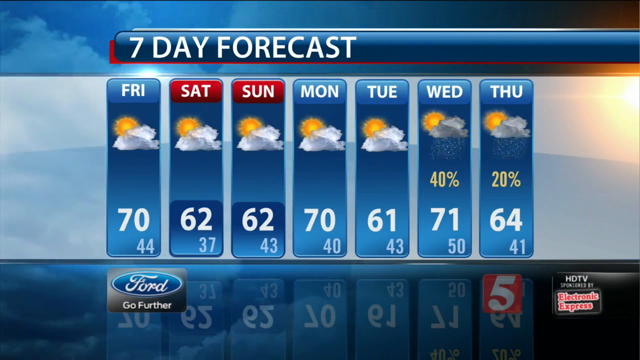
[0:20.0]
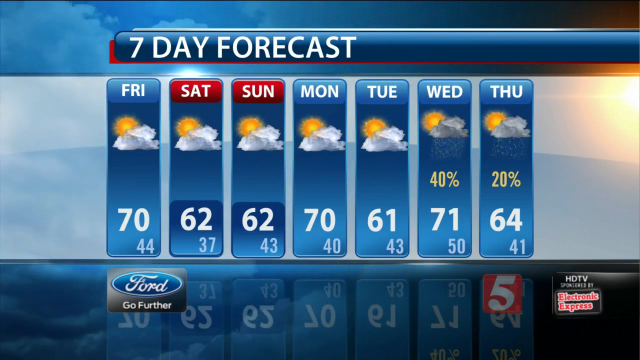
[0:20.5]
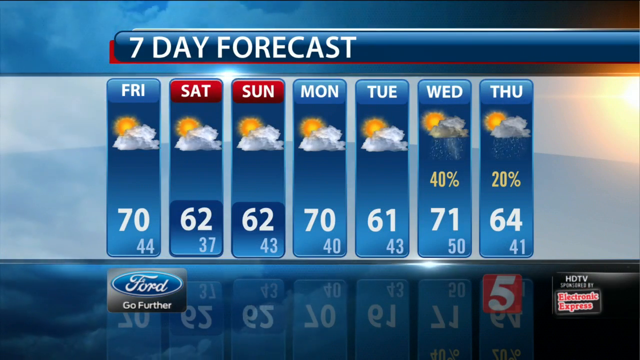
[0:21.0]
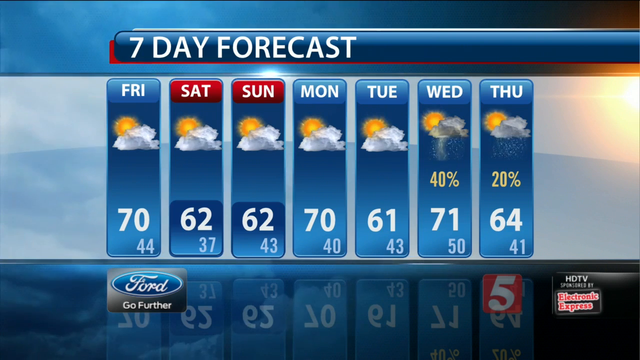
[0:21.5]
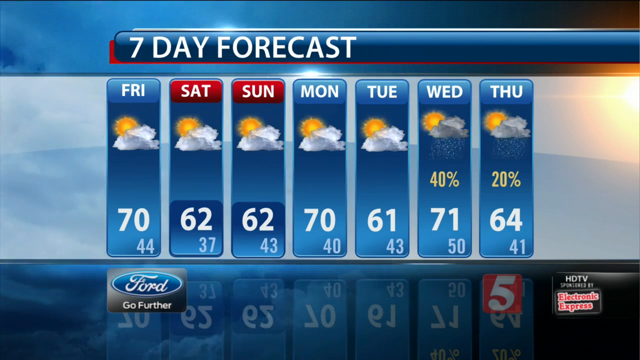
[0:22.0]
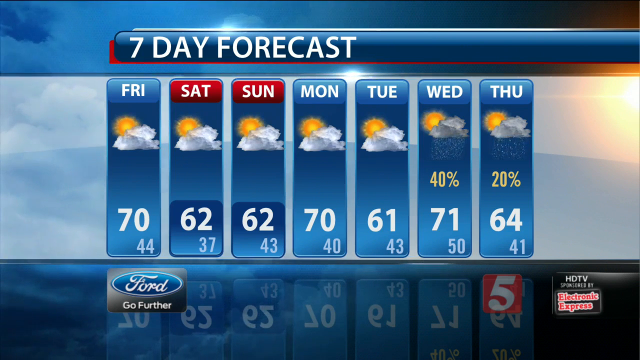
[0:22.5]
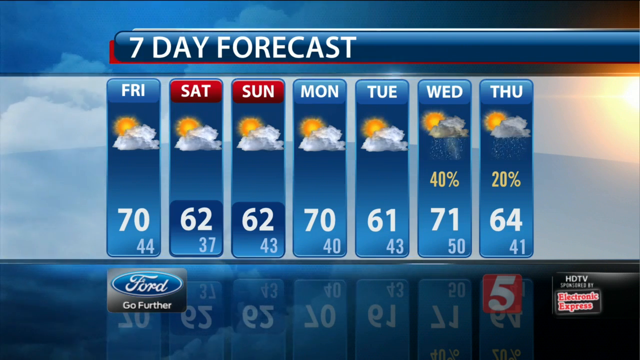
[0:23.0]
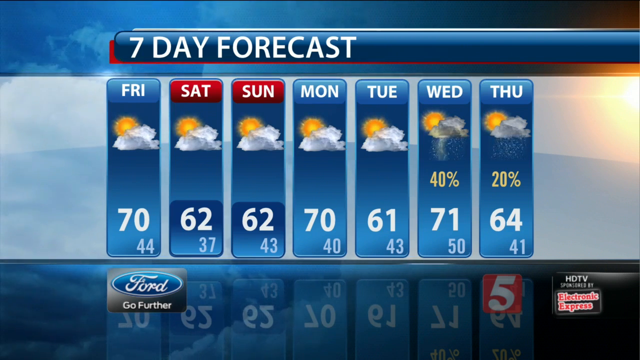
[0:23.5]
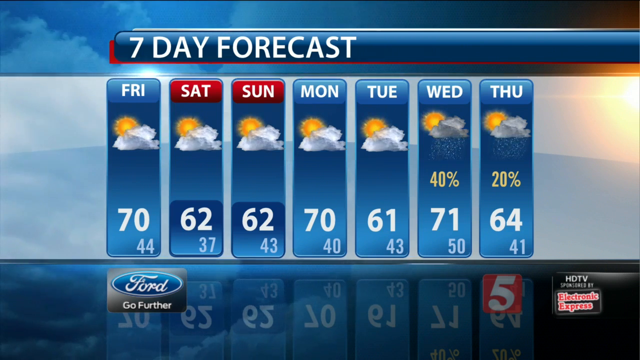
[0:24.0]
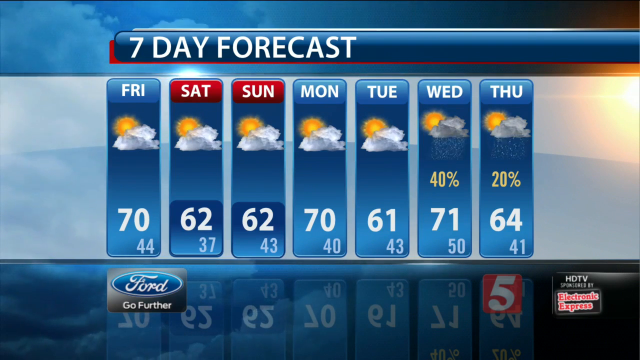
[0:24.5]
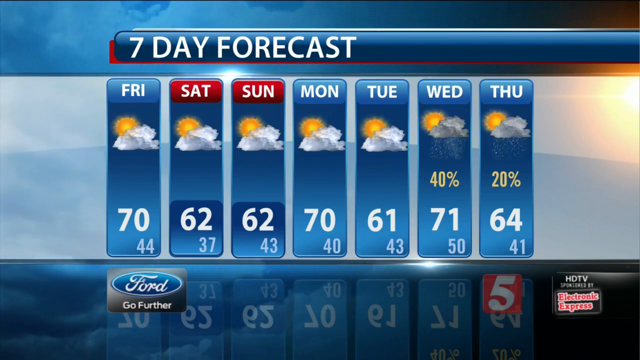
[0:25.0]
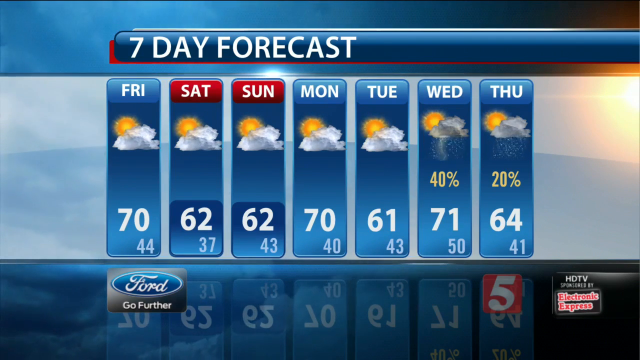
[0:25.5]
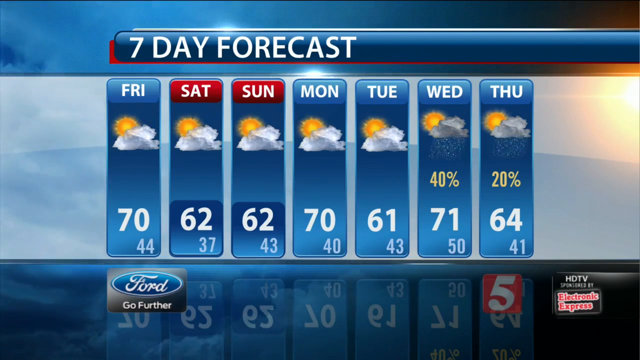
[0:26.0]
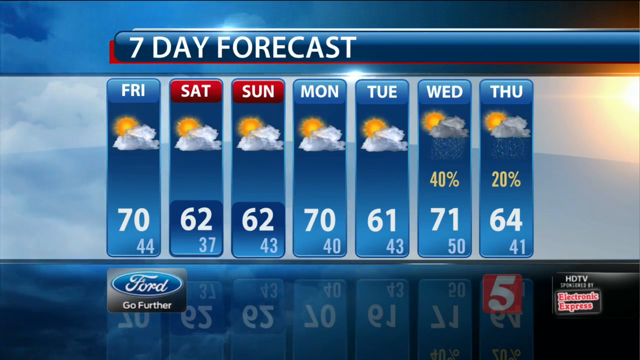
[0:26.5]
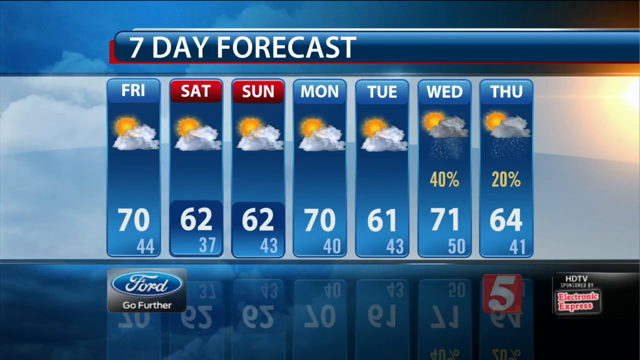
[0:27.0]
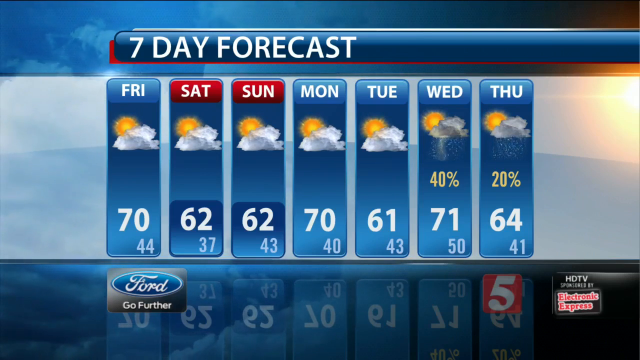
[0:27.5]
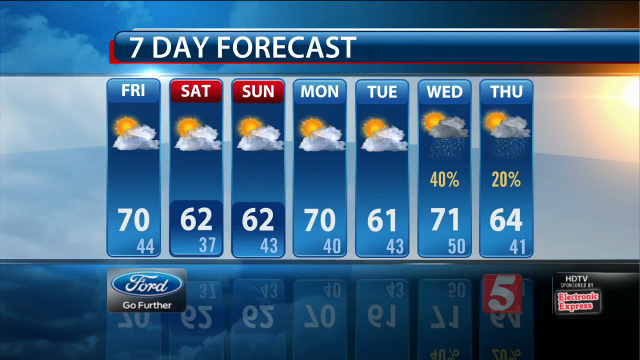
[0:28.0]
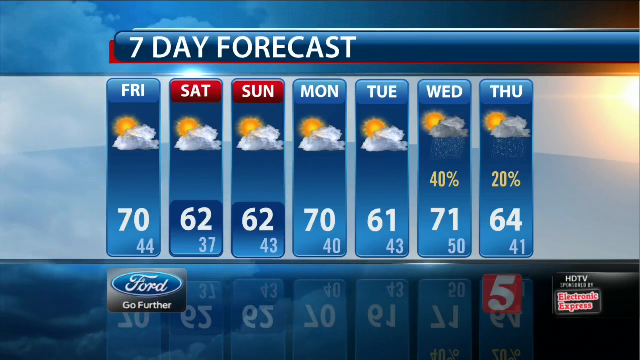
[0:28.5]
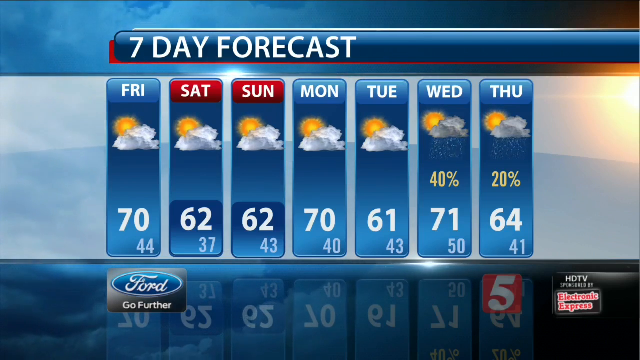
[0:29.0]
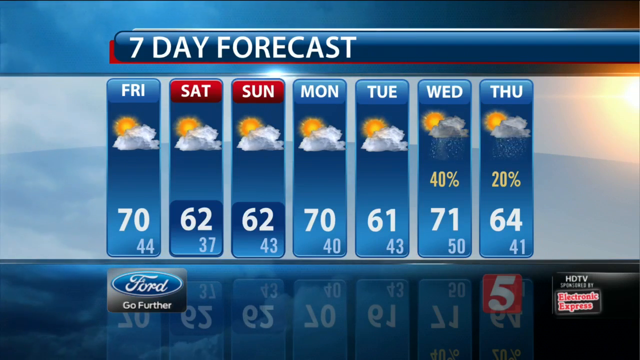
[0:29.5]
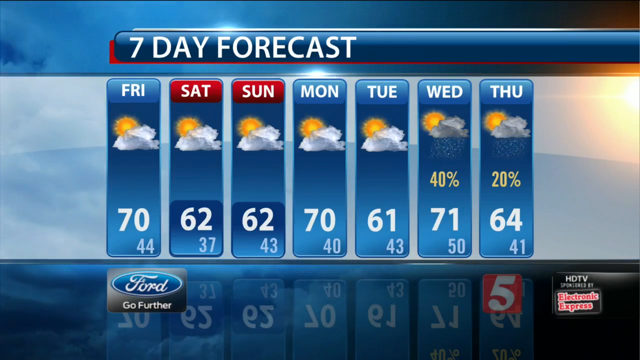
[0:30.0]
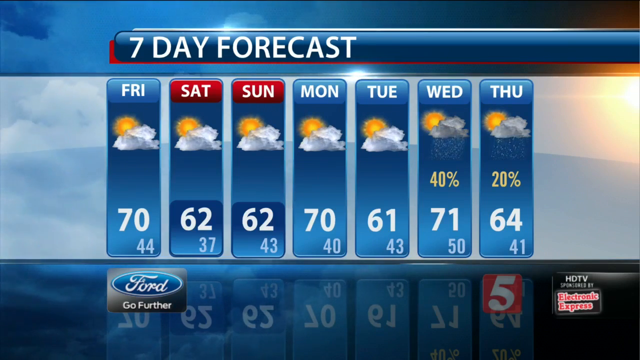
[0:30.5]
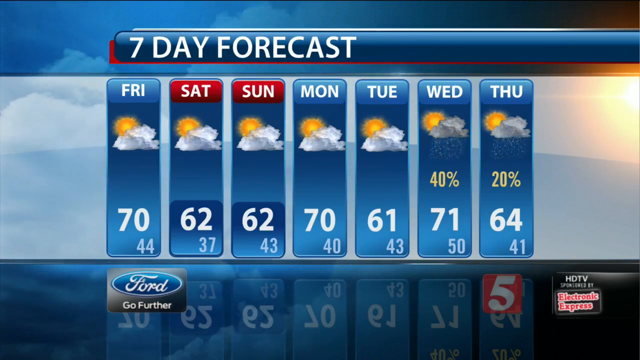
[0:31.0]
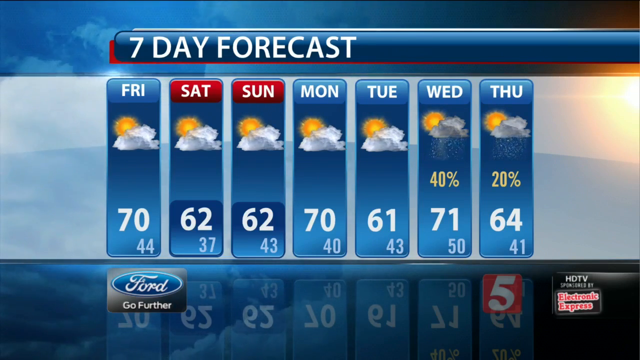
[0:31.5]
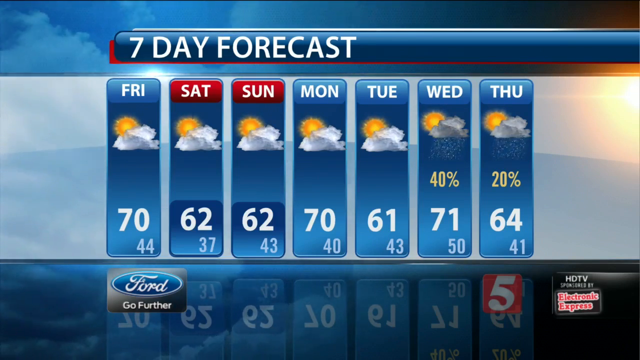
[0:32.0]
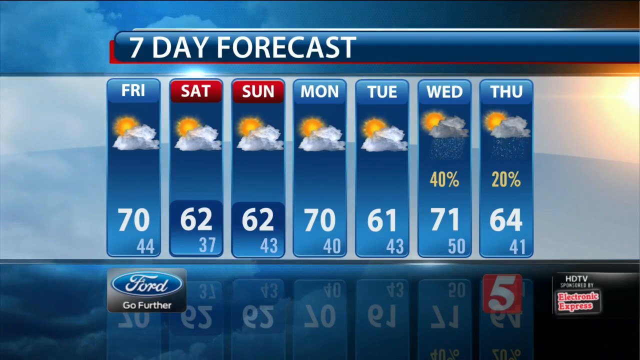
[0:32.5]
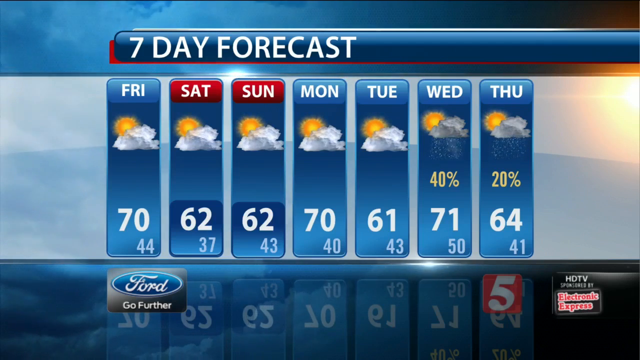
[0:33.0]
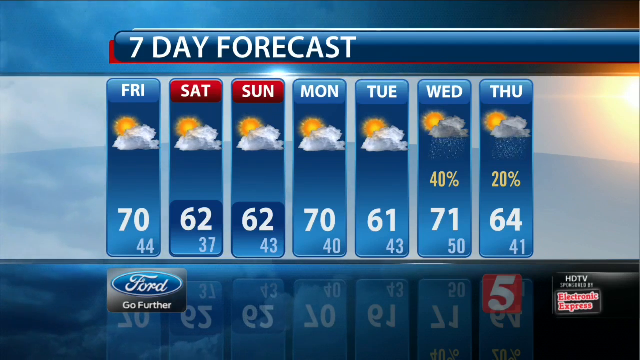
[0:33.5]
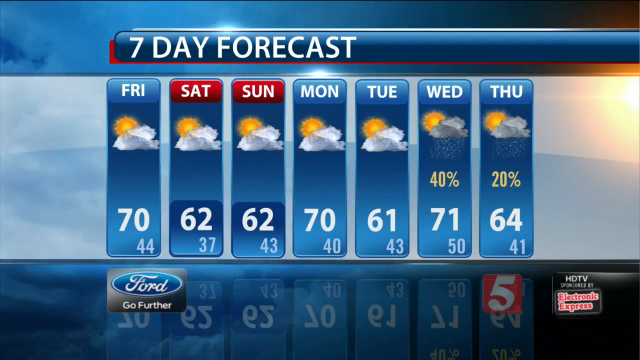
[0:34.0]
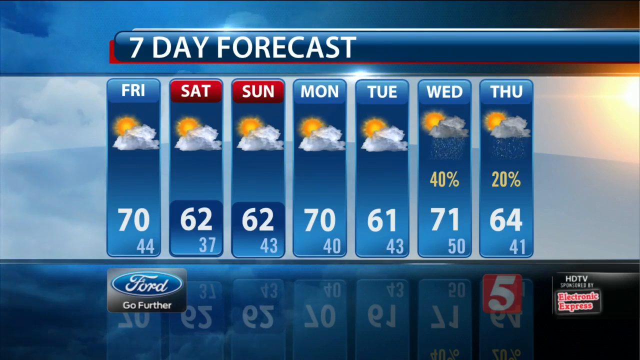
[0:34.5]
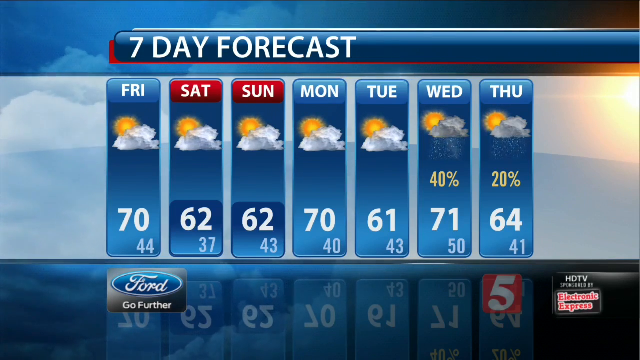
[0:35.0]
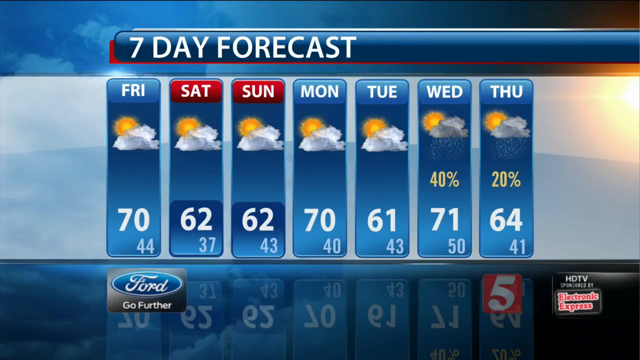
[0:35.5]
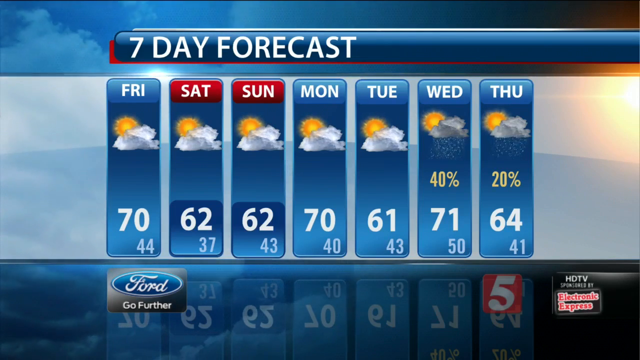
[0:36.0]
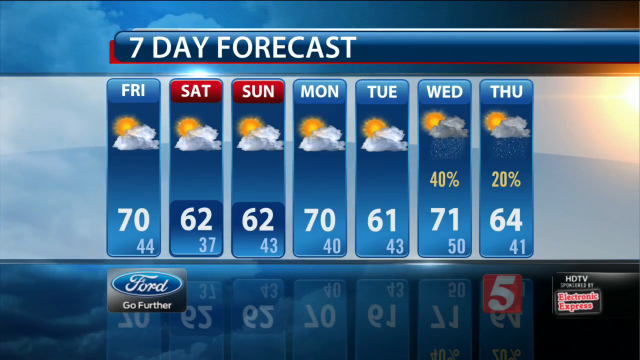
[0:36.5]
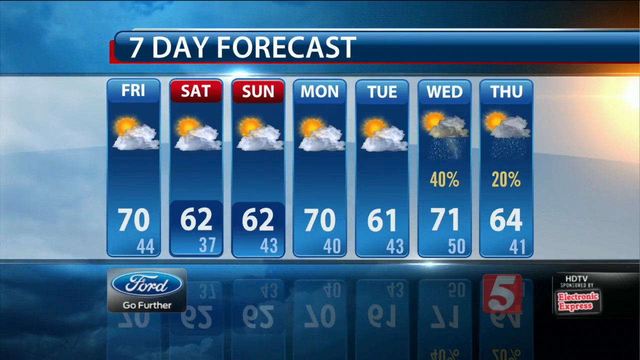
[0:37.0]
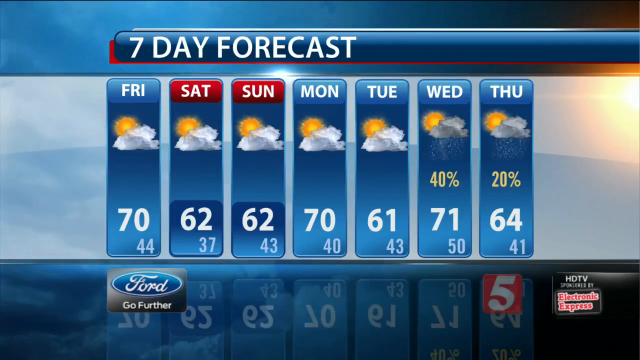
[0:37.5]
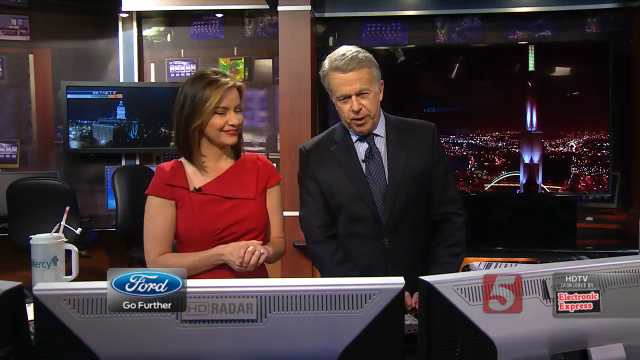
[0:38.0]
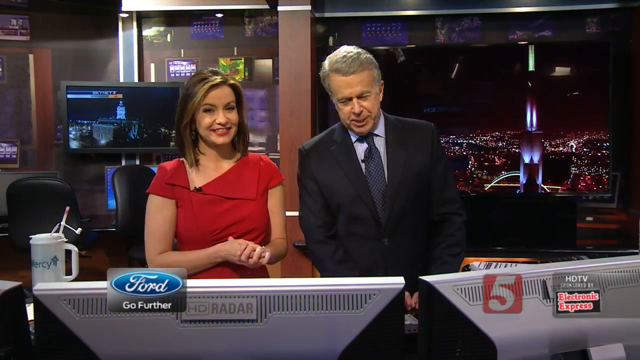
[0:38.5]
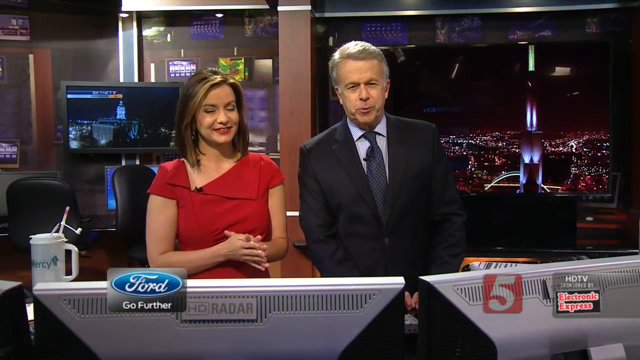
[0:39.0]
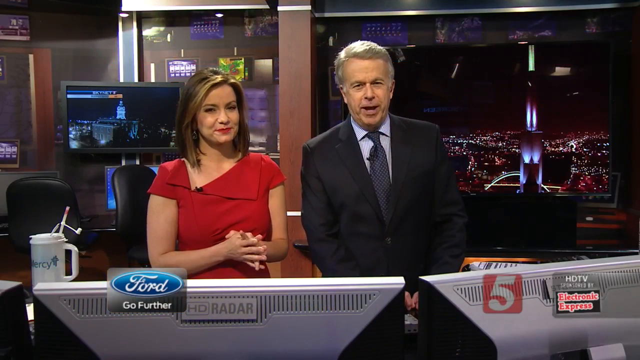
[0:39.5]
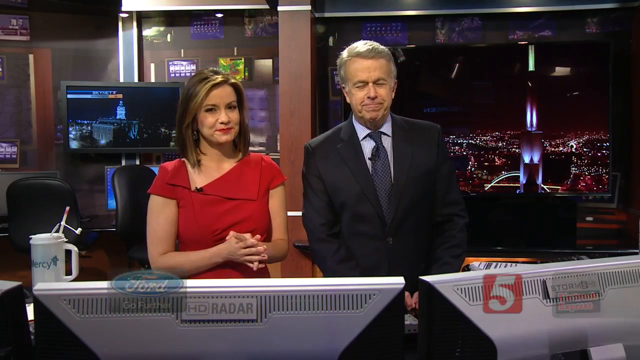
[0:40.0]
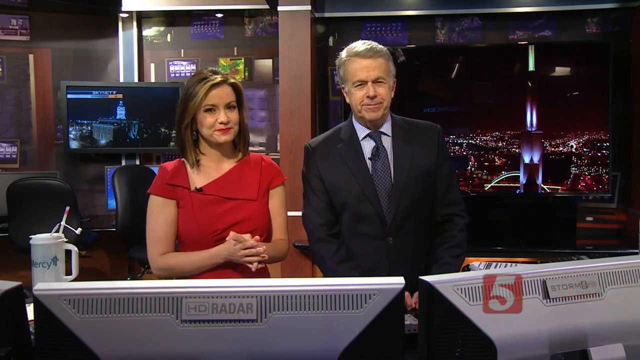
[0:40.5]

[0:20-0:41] A seven-day forecast covers Friday, Saturday, Sunday, Monday, Tuesday, Wednesday and Thursday, with Wednesday showing rain at 40%. The scene then changes to two people, a man and a woman, who look somewhat mature and older. The woman wears a red dress and the man wears a black suit. They are indoors and look like they are presenting the news. They then present the weather for the upcoming days: Friday at 70% and Saturday at 62%. The report is shown as sponsored by Ford. The background looks good, and there is a cup on the table. The two appear to be standing rather than sitting, and they look like they are saying goodbye as the news apparently finishes.